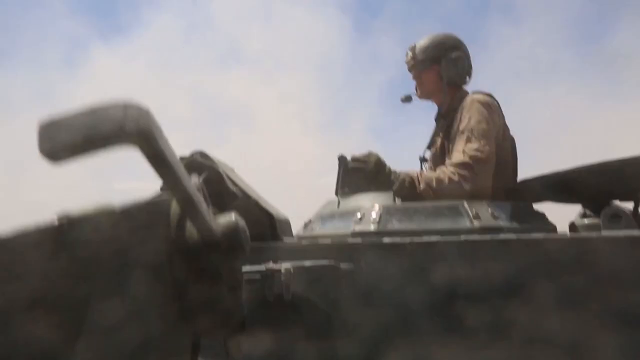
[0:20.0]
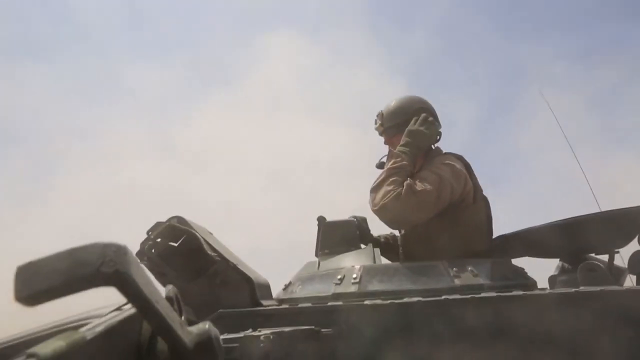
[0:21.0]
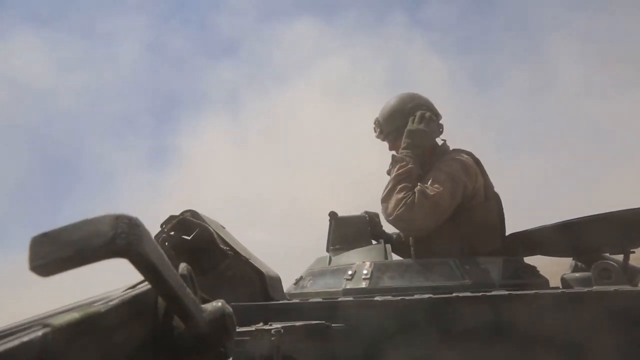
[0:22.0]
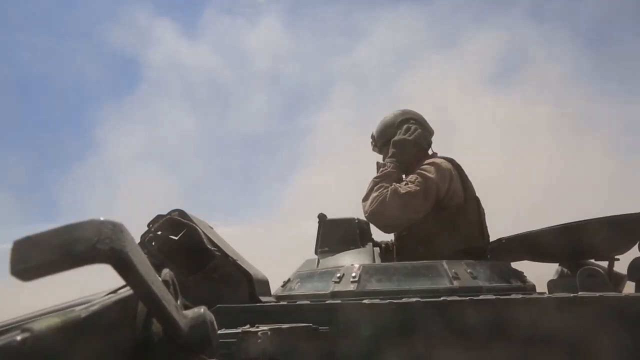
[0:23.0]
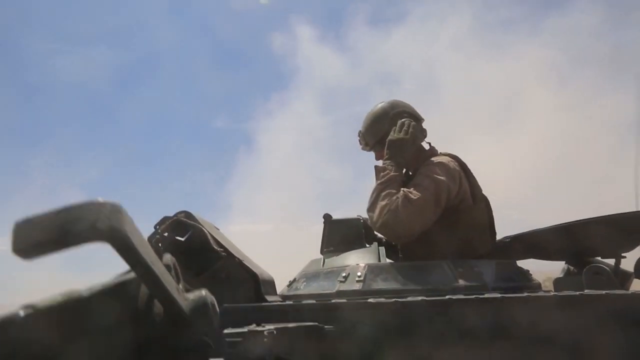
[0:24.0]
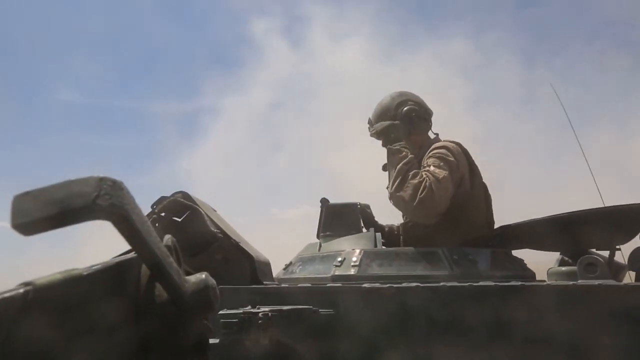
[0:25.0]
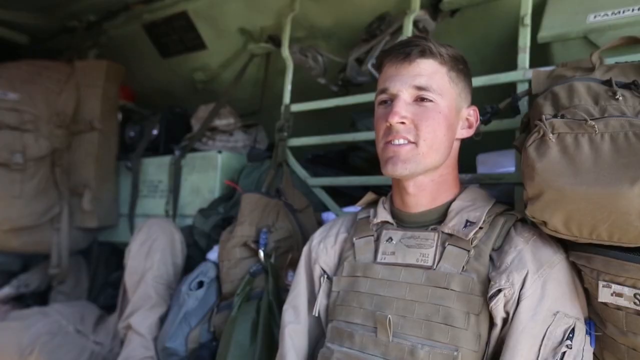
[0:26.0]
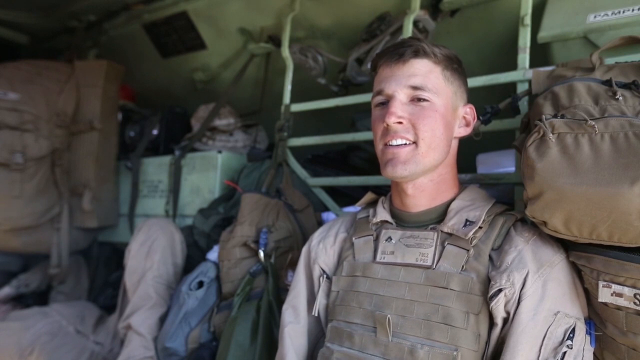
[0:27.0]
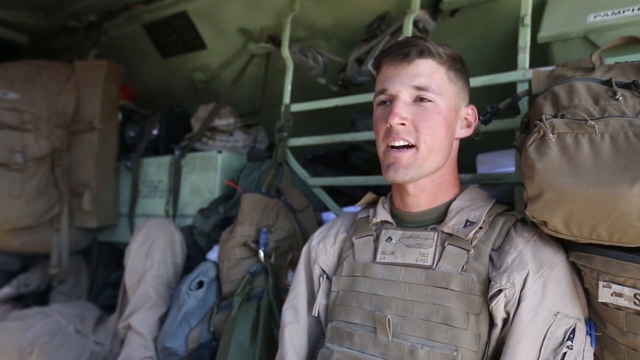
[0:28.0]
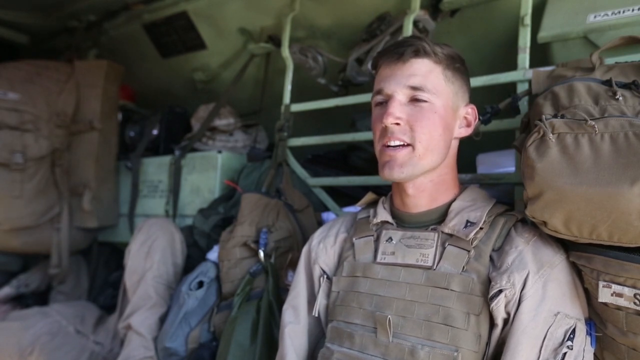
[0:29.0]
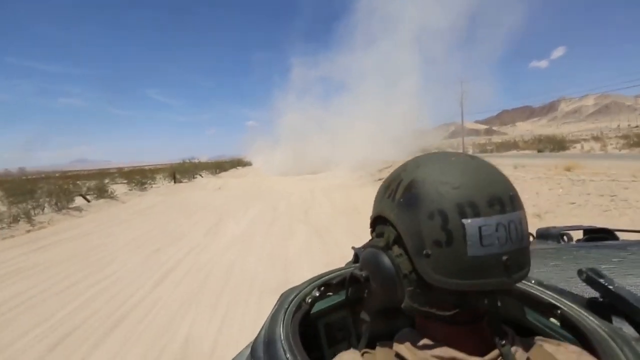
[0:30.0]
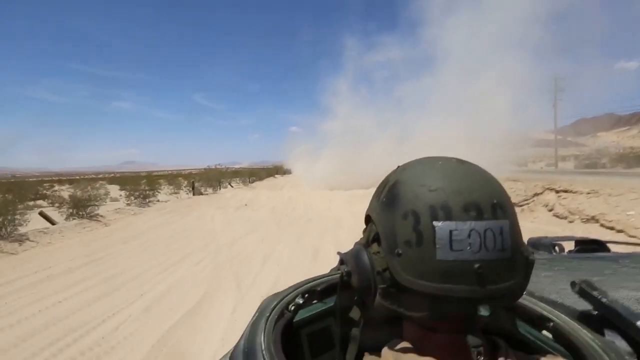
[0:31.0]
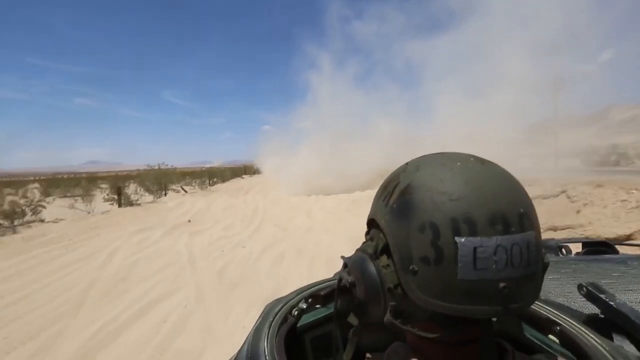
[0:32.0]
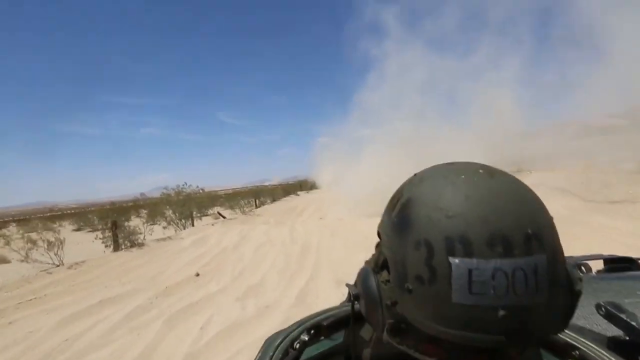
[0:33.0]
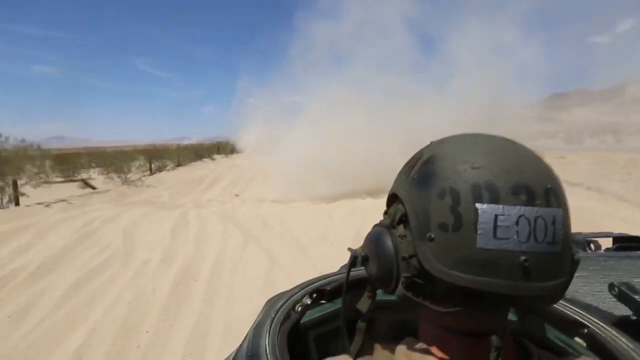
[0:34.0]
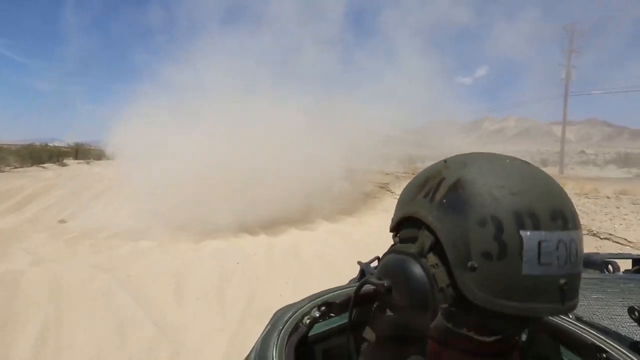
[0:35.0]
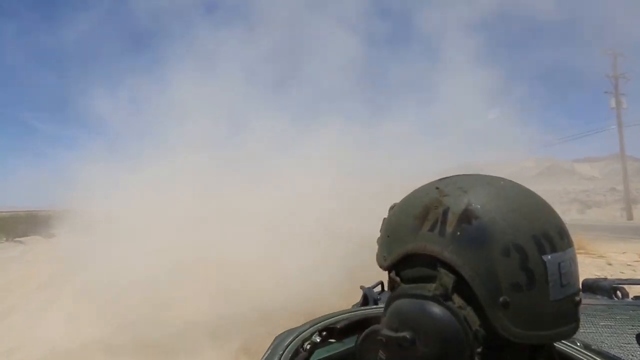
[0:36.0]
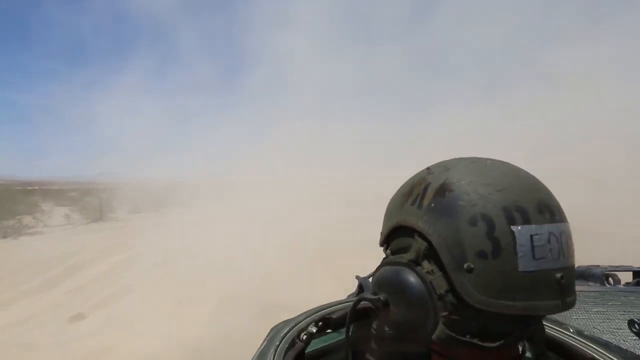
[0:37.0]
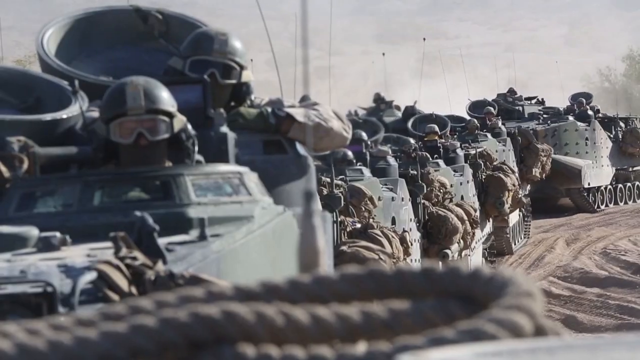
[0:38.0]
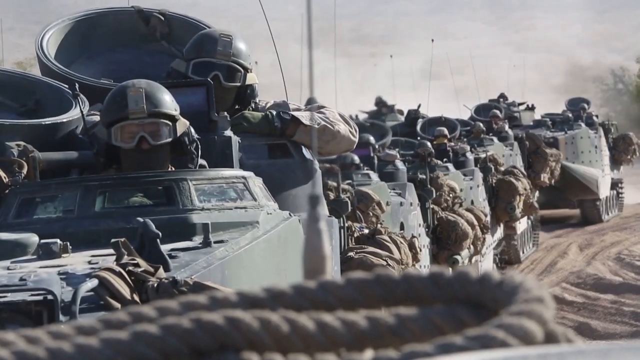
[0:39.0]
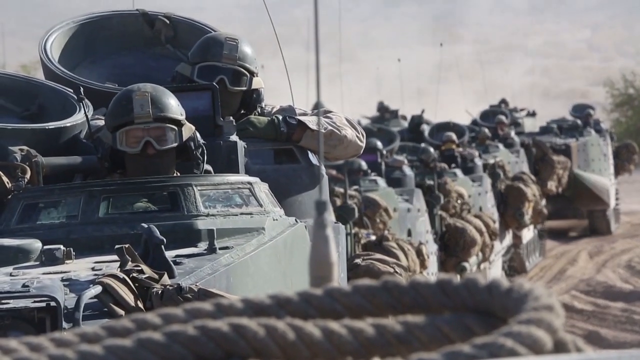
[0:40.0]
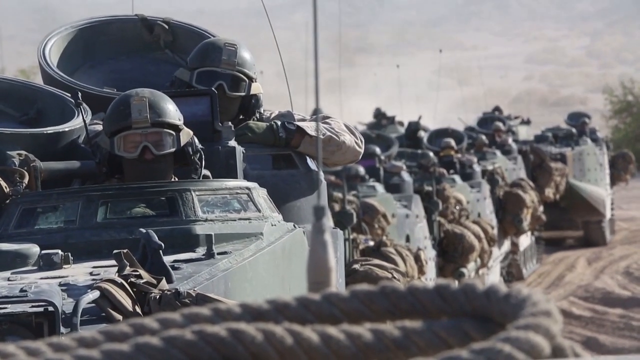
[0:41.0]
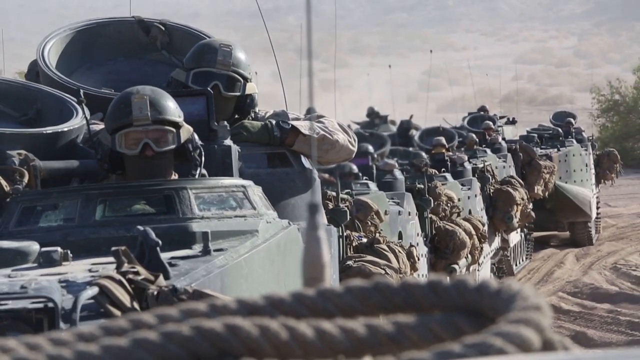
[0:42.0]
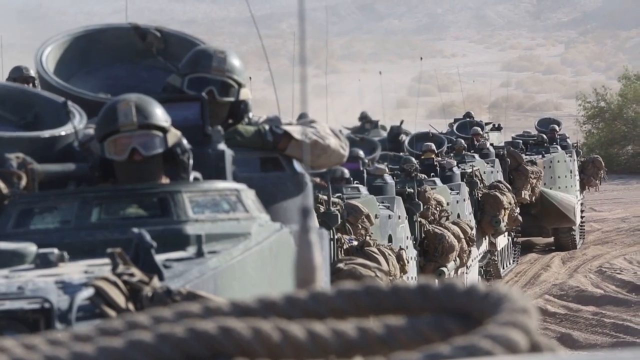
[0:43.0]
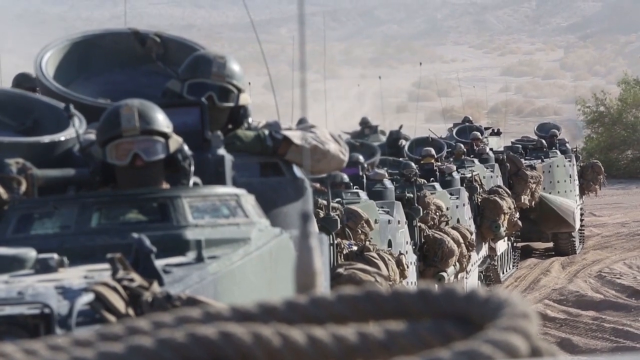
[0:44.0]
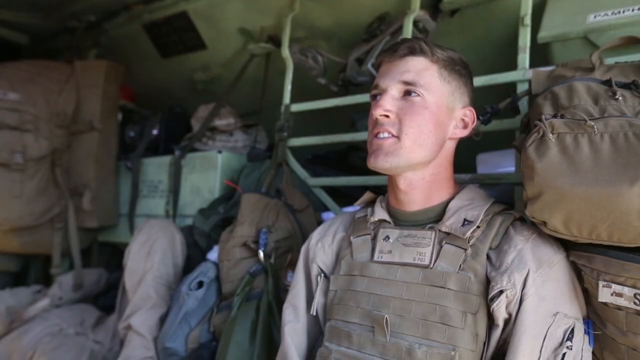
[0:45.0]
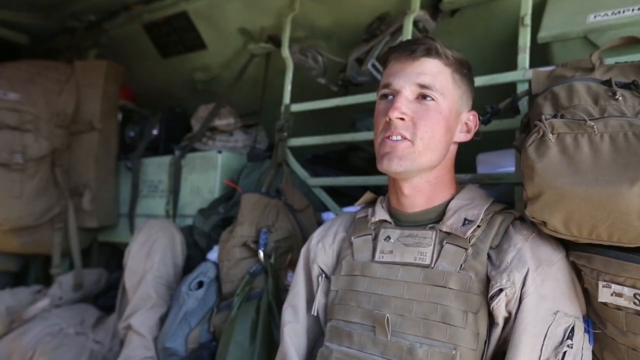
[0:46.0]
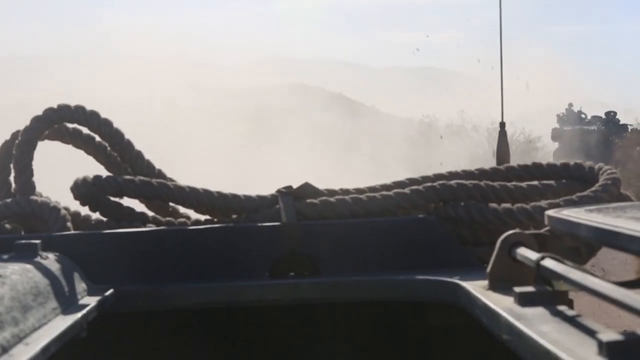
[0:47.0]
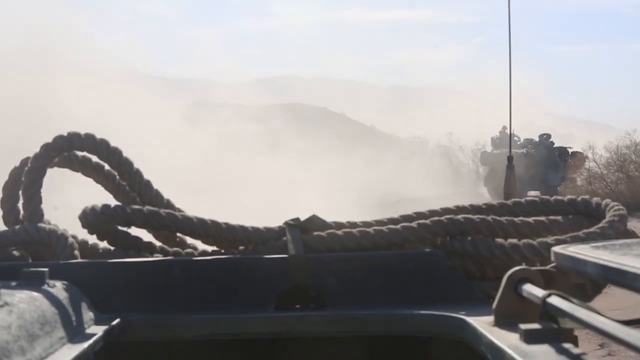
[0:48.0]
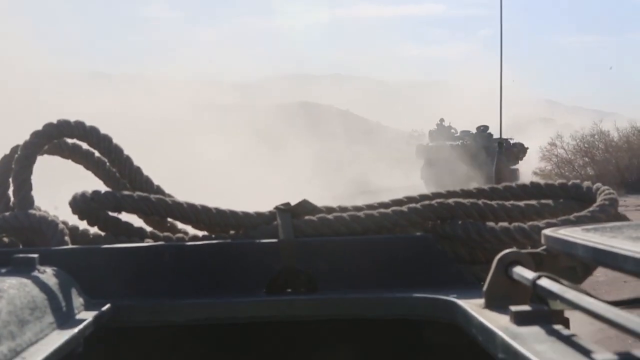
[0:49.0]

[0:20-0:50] What looks like a soldier pops out of a tank through the circular lid area and stands there. The tank seems to be moving. He has a helmet on and holds his left hand sort of over his left ear, as if trying to listen to something being communicated to him. The tank jostles him back and forth, and he seems to be trying to stay upright. The video cuts to more footage of the soldier being interviewed inside what looks like some kind of secluded section. He looks quite pleased, with a bit of a smile on his face. He briefly looks down toward the right side of the screen and then continues looking up and to the left at the person off screen. The video then cuts back to the soldier in the tank, this time filmed from behind him. On the back of his helmet, letters are written on a piece of tape: "E-001". The soldier's head jostles around, turns toward the left, then looks ahead as the tank continues on through the sand.